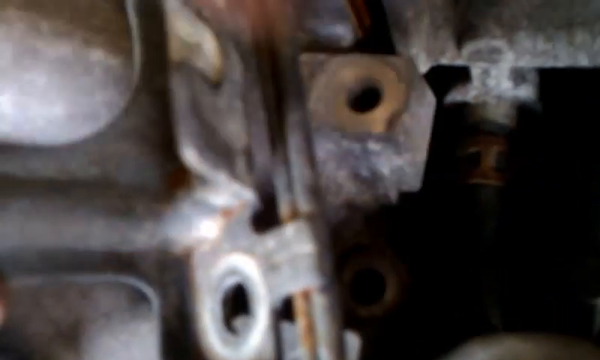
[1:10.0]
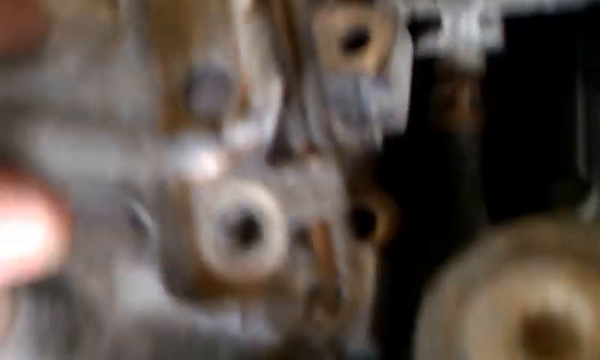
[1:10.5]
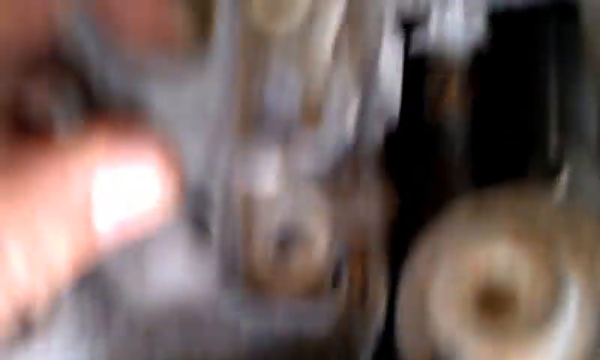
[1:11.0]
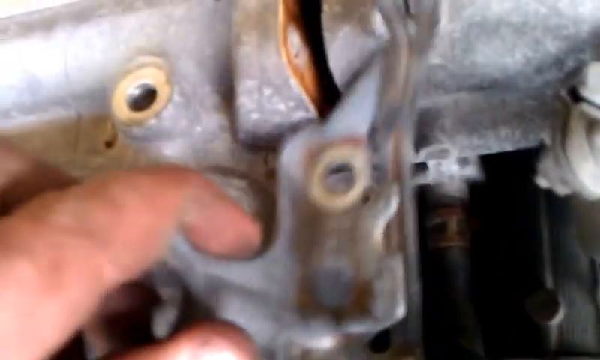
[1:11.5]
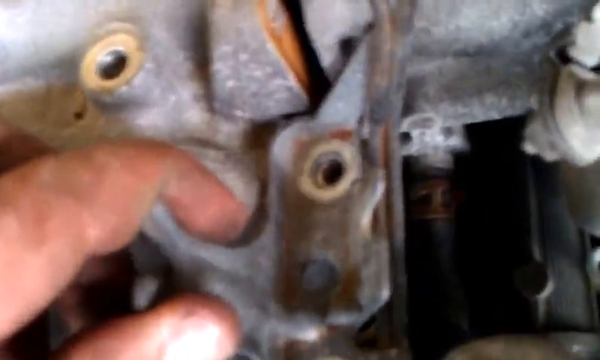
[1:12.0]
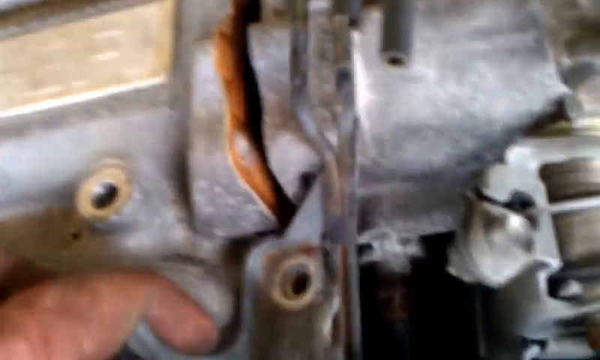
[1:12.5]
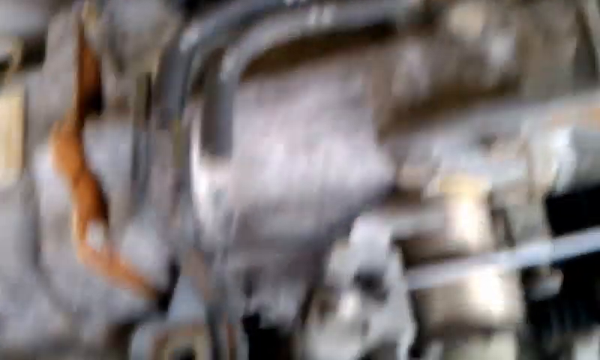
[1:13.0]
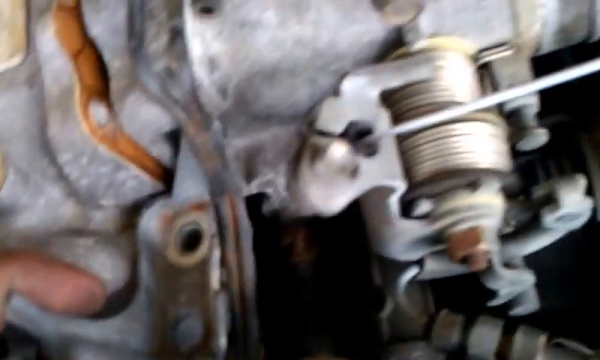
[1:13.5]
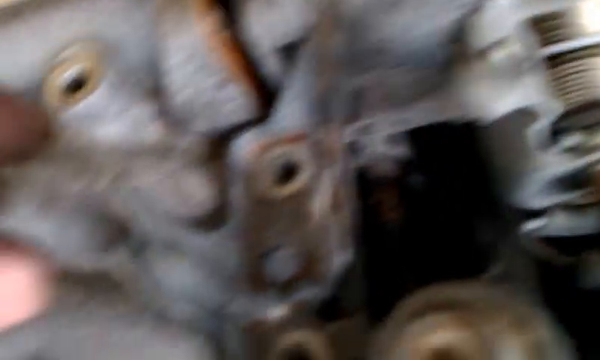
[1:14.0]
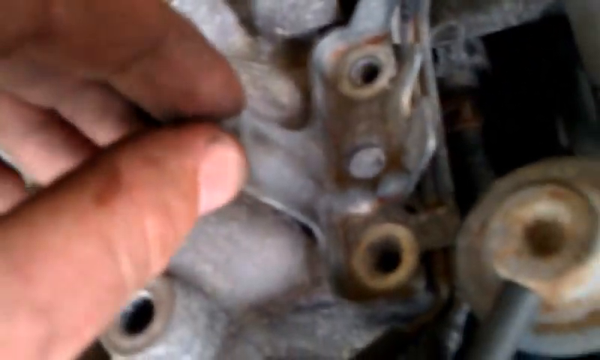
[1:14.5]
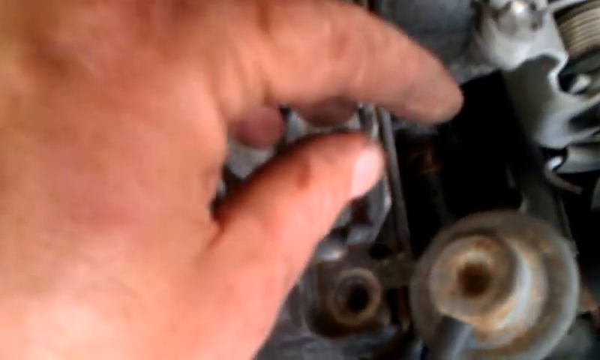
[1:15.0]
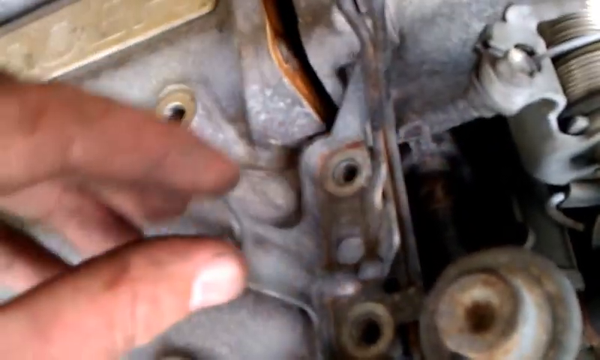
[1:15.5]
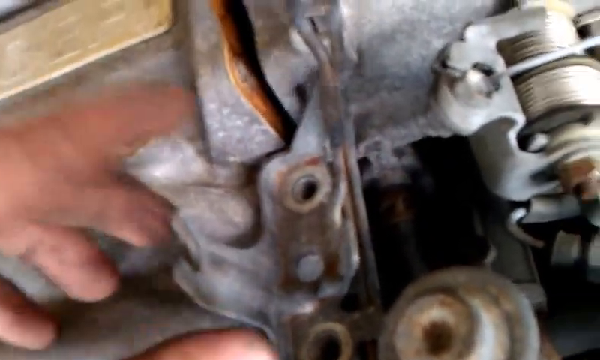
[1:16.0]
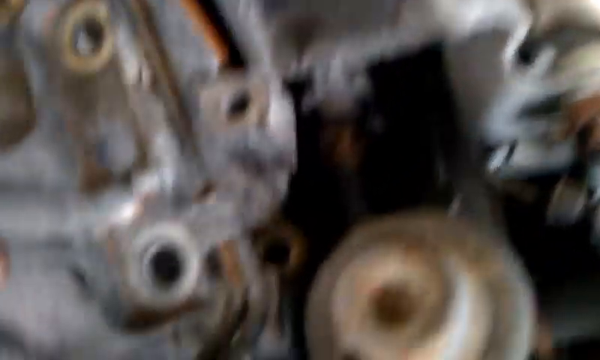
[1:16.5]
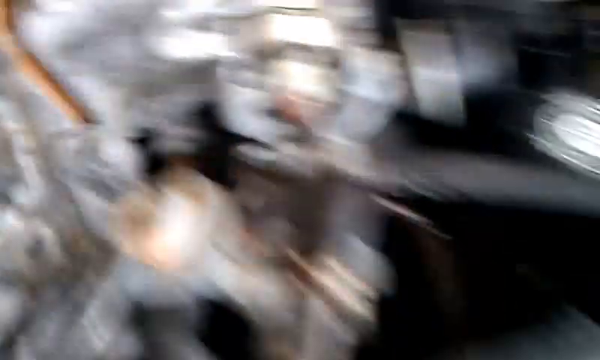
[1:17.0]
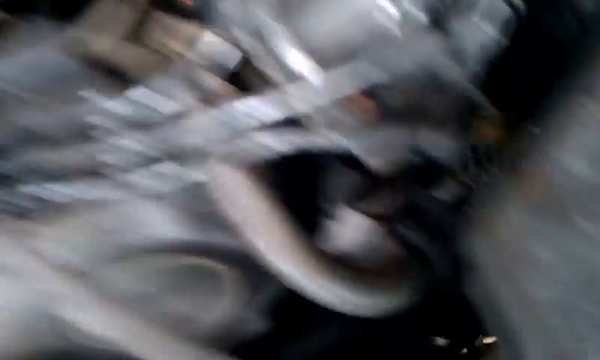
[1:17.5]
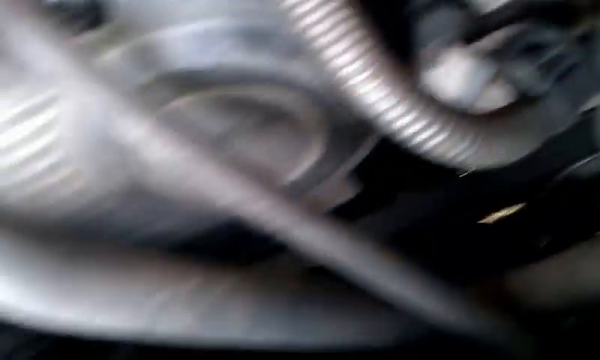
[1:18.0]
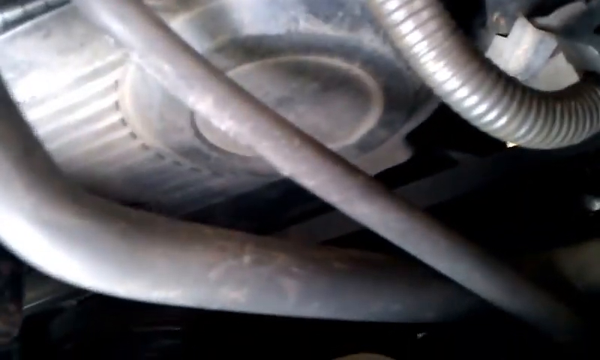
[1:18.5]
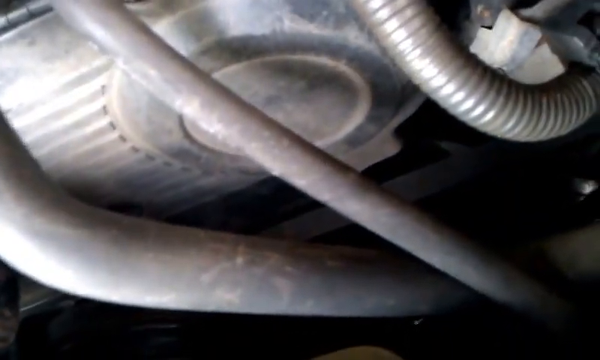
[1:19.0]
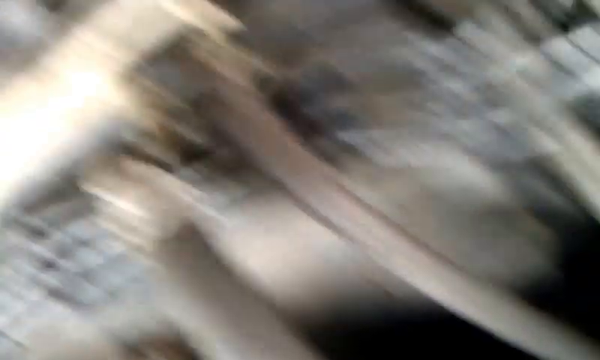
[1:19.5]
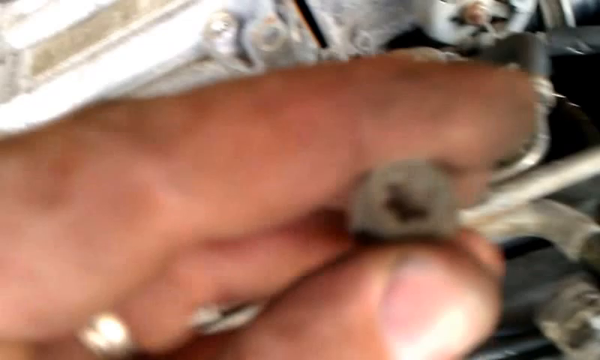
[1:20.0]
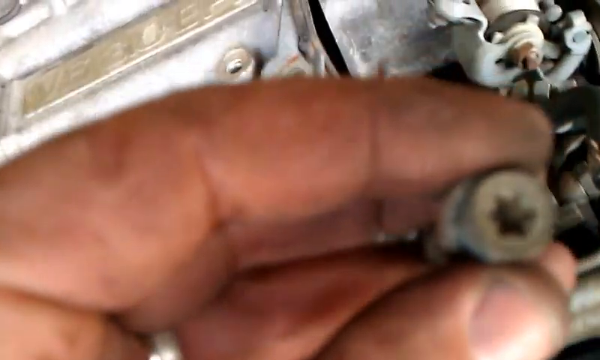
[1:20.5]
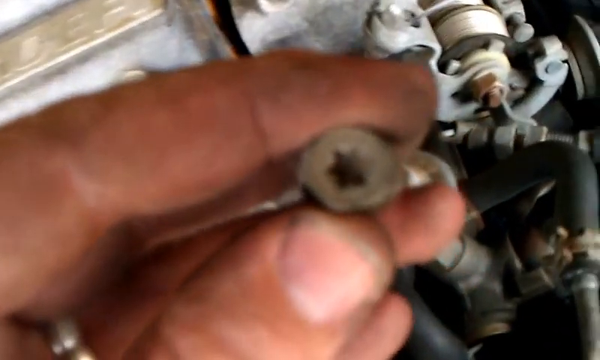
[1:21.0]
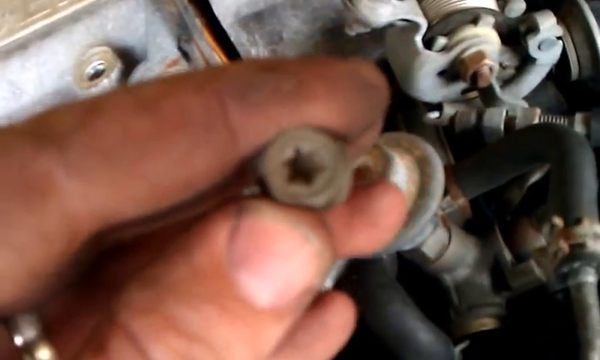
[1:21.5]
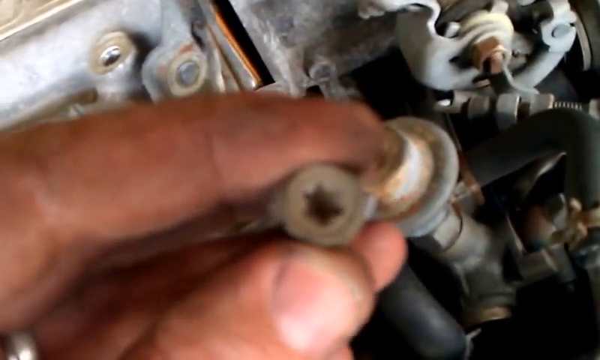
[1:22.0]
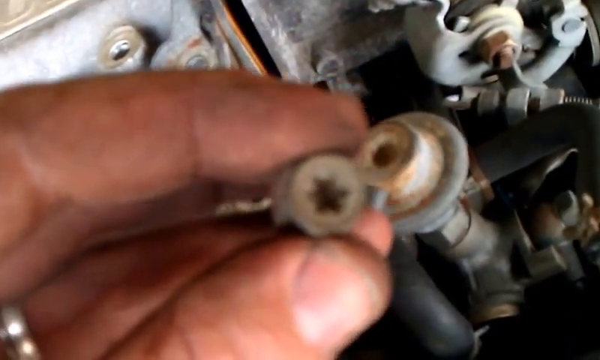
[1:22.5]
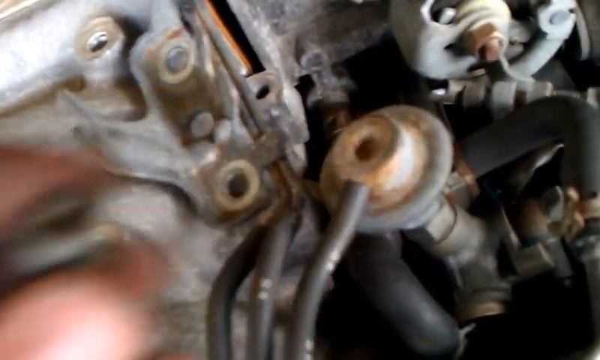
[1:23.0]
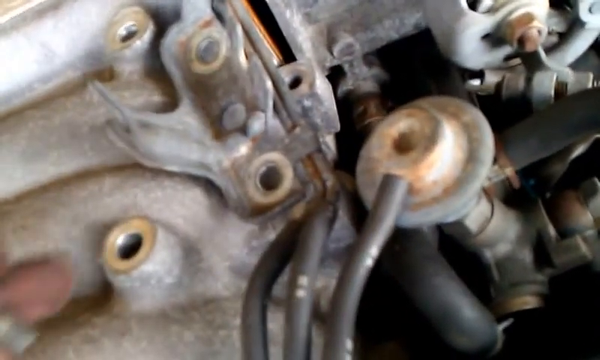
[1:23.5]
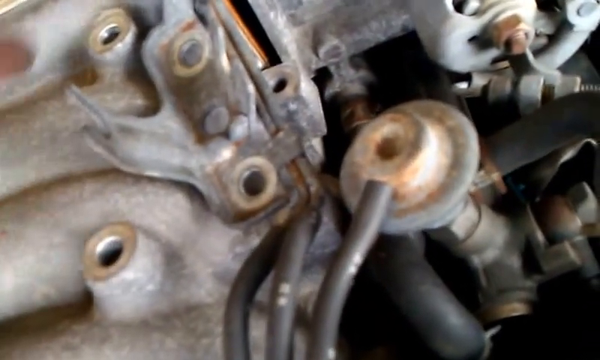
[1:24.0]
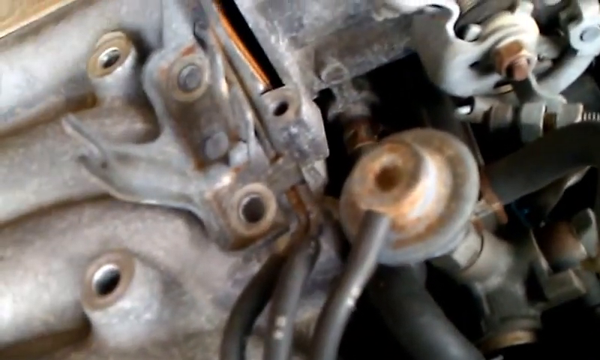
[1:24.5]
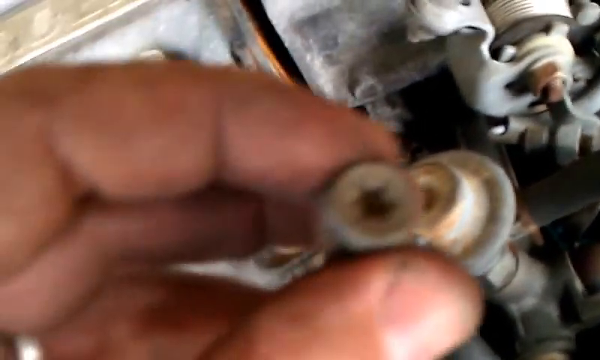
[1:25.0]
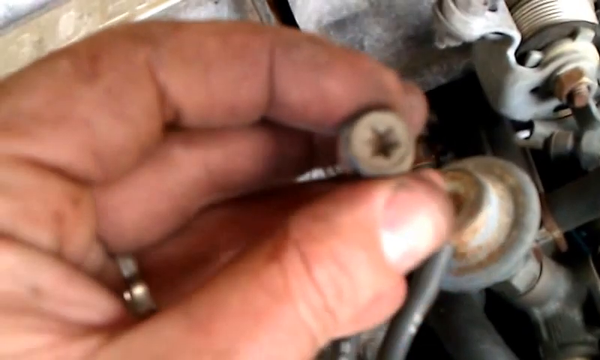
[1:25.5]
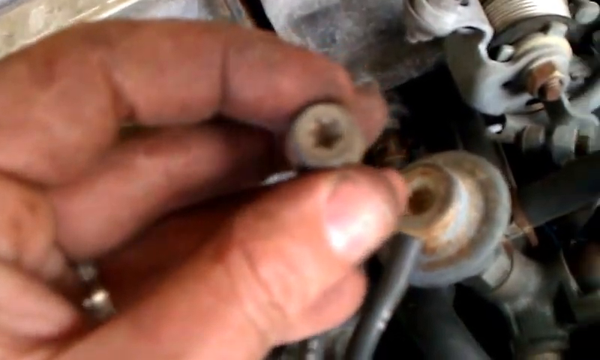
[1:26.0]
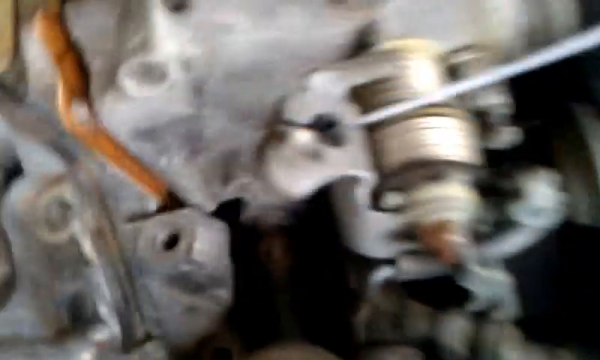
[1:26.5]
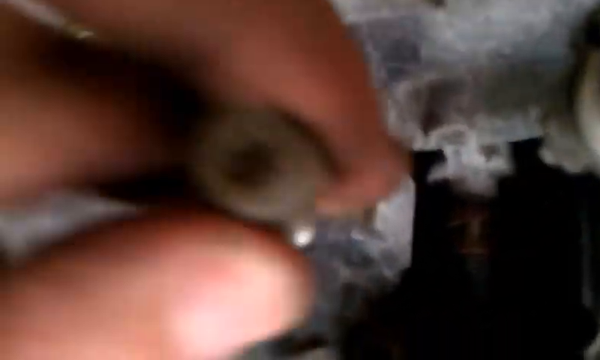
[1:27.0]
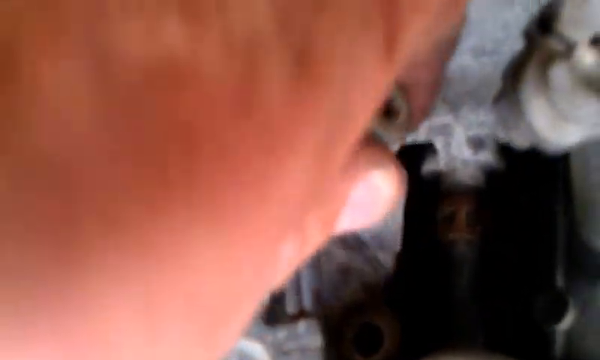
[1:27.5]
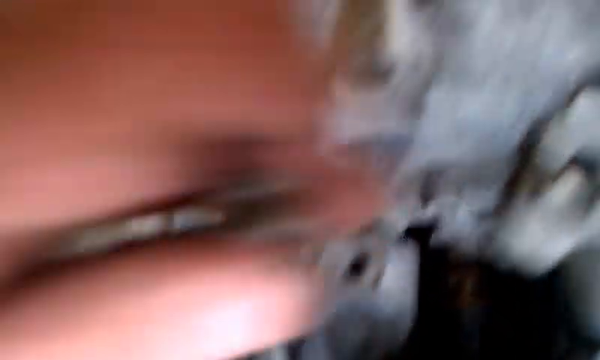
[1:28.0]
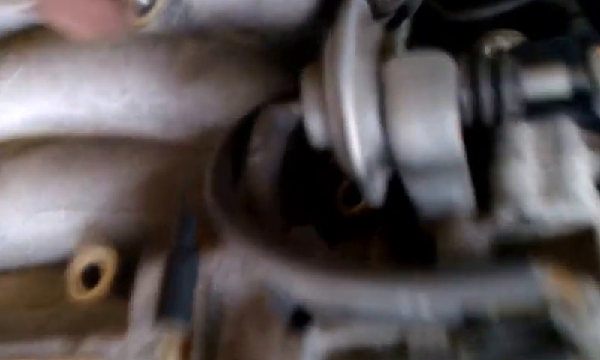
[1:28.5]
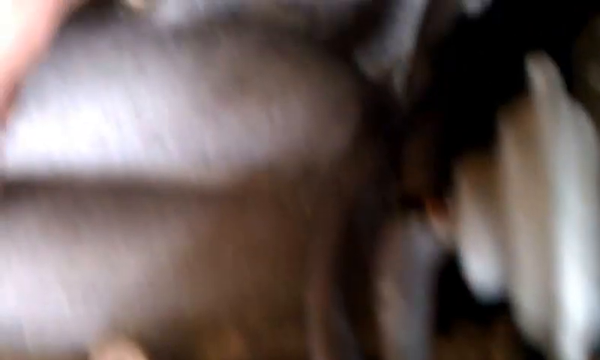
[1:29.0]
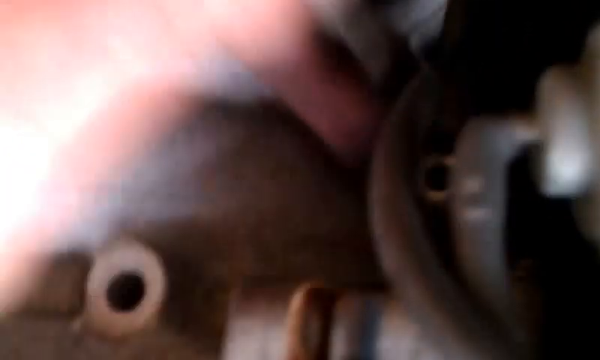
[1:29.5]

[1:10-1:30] The camera comes up from the right side of the engine, where it was pointing at a hole. A little plate on the left side is kind of shaped like a T, with the top part going to the right and a hole at each end of the T. The fingers grasp the left side of it from the sides and move it up and down, showing that it is loose. The camera moves down toward the bottom right corner, showing a really big metal hose coming from the left, a somewhat smaller one coming from the left corner, and one like a flex hose on the right side. It goes back up, and he holds a little bolt with his thumb on the bottom and pointer finger on top, rubbing it back and forth between his fingers so it half rolls in his hand. He taps two holes, then brings the screw back to the camera to look down into it. The side of a finger, the back of the thumb, and the middle finger are visible, along with the bottom half of a ring on his ring finger. He looks down inside, starts to put the screw in the hole, pulls it out, and goes to a different section of the engine.